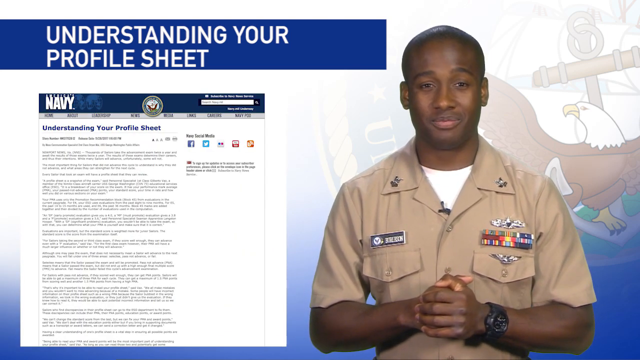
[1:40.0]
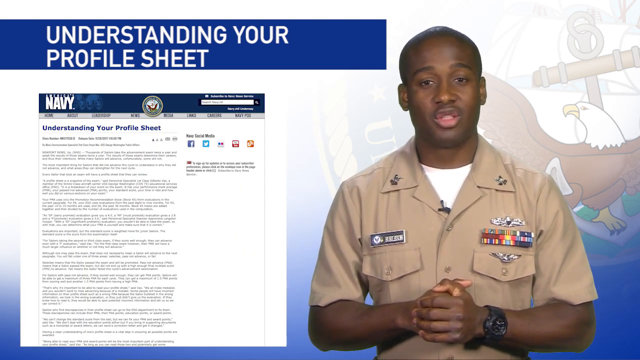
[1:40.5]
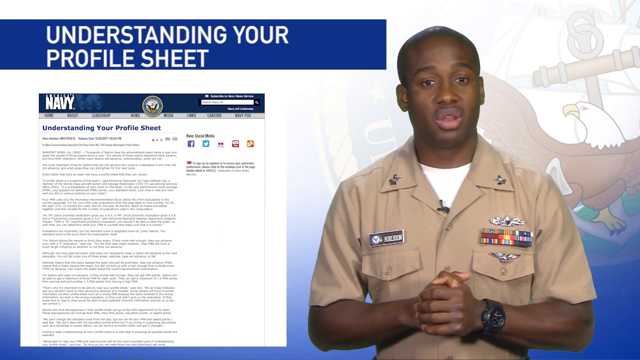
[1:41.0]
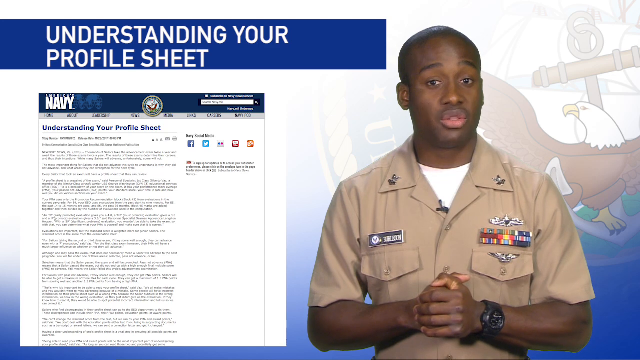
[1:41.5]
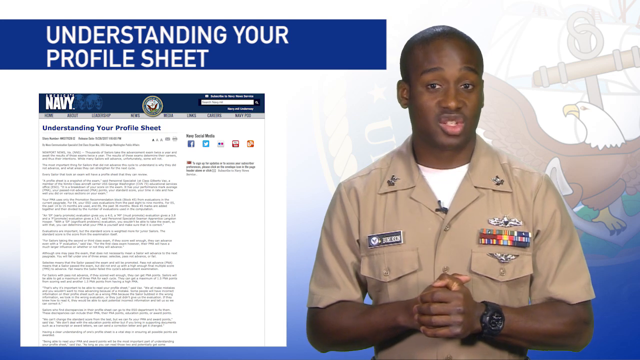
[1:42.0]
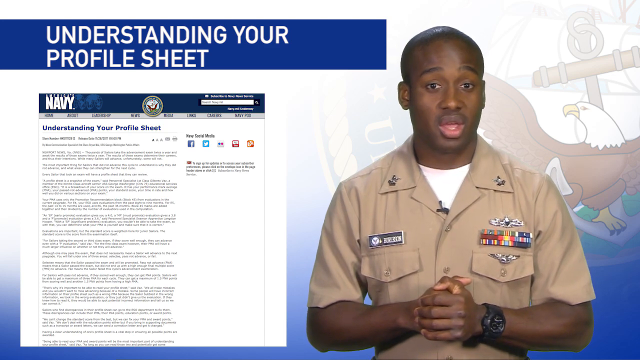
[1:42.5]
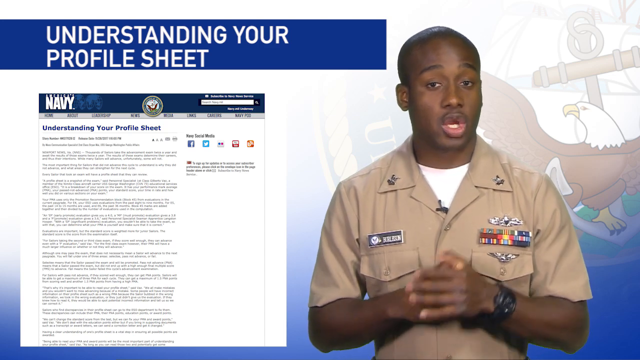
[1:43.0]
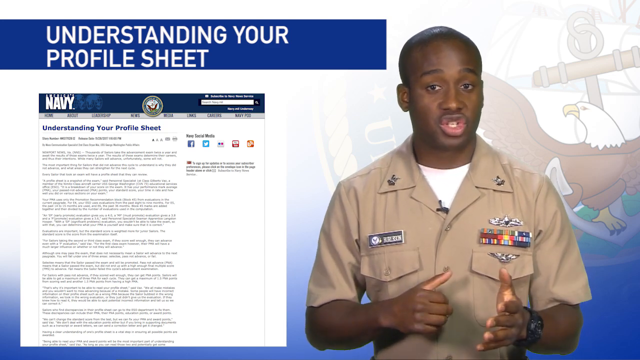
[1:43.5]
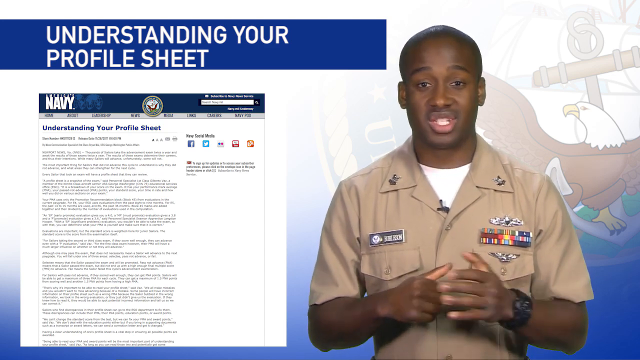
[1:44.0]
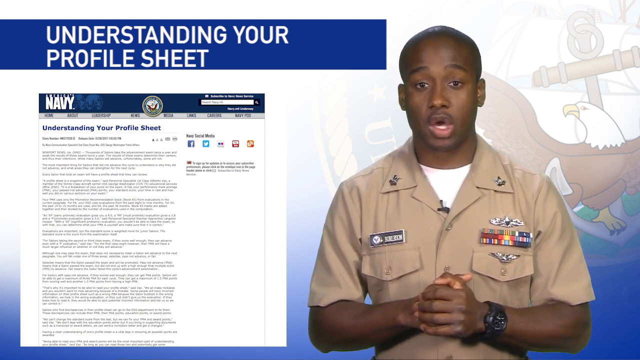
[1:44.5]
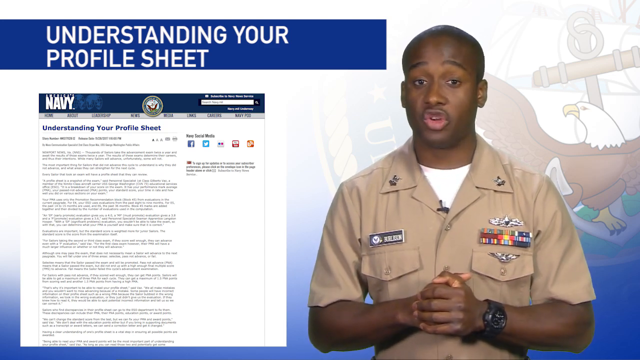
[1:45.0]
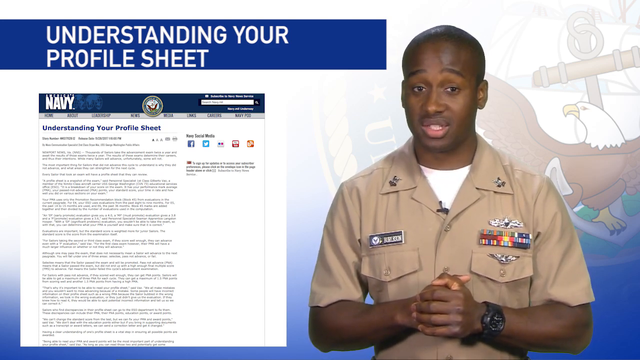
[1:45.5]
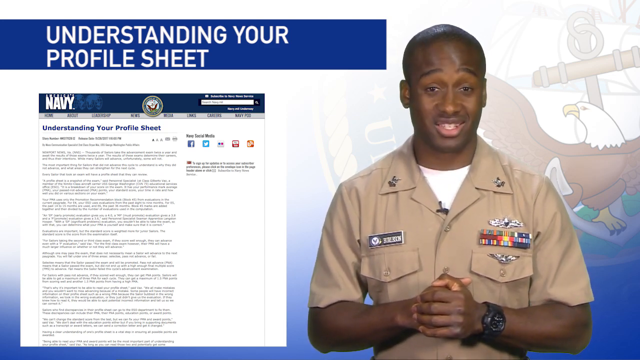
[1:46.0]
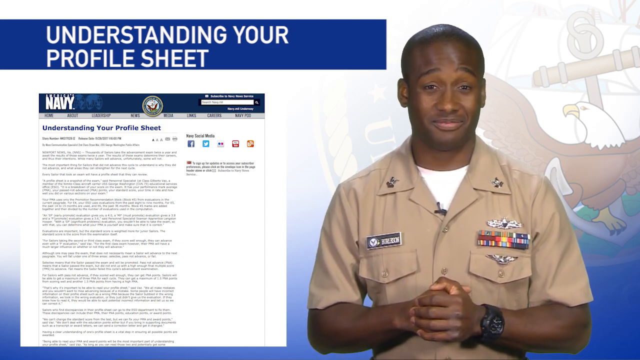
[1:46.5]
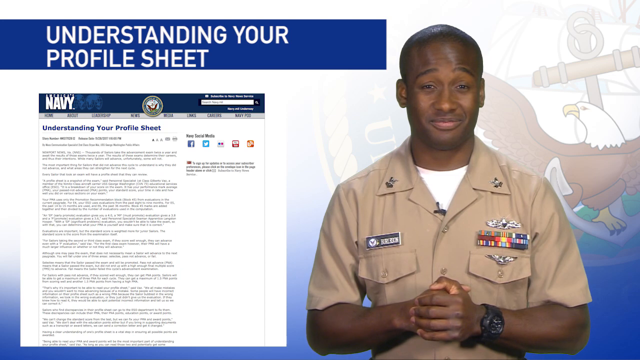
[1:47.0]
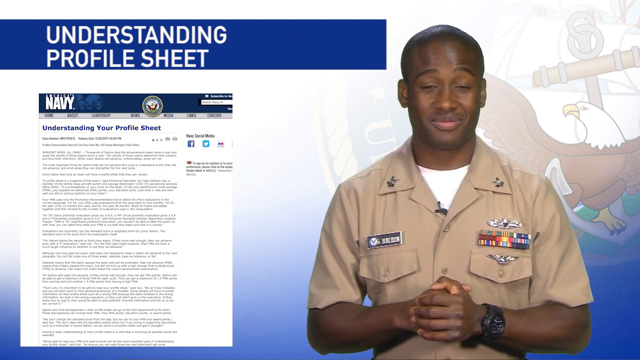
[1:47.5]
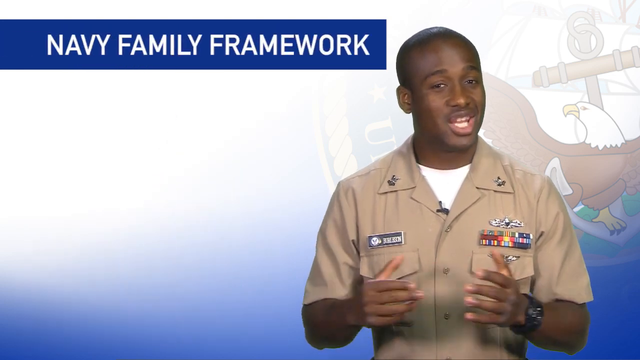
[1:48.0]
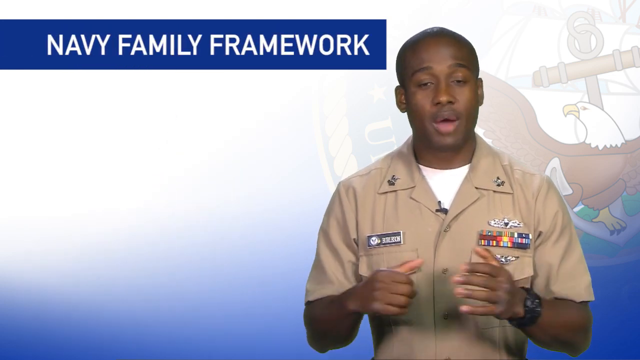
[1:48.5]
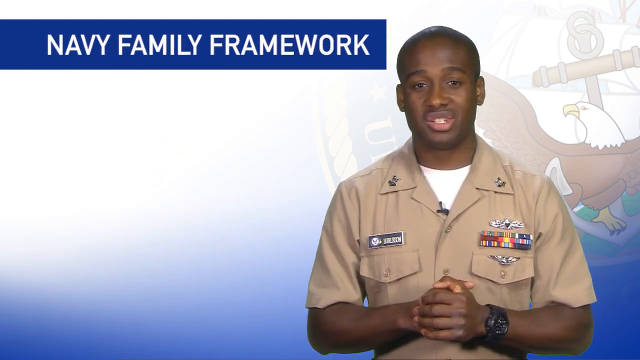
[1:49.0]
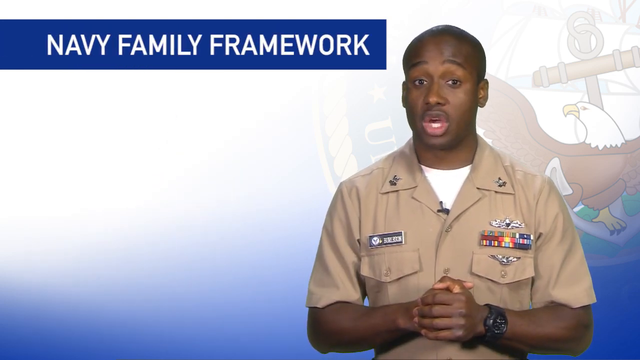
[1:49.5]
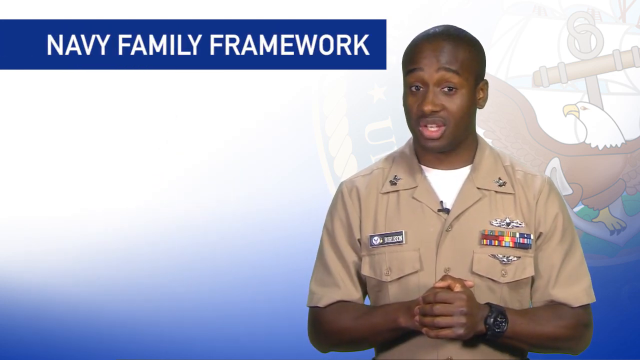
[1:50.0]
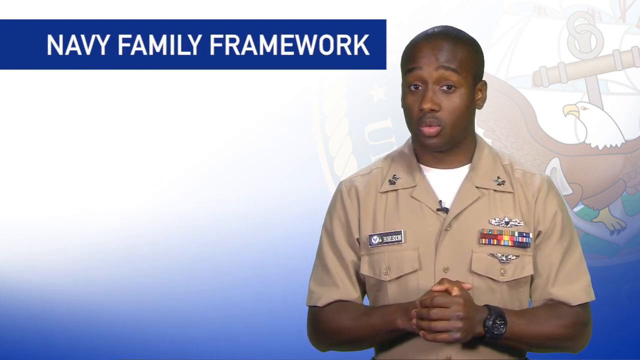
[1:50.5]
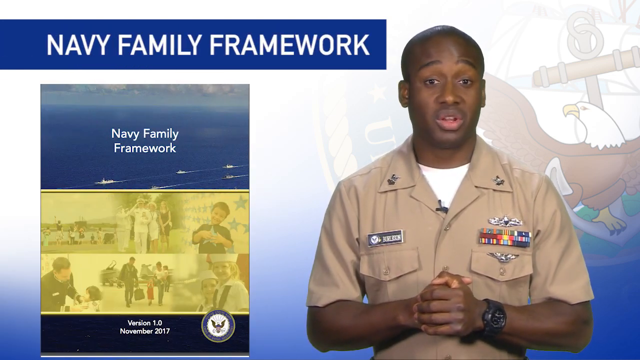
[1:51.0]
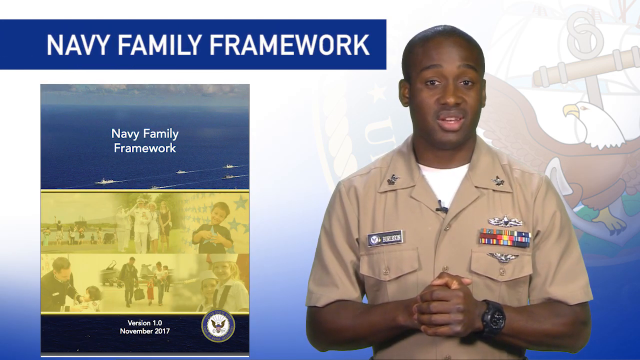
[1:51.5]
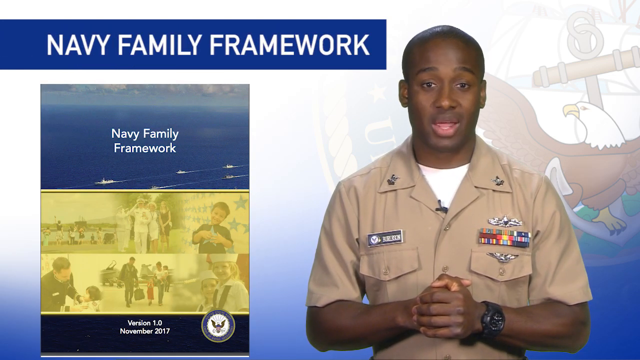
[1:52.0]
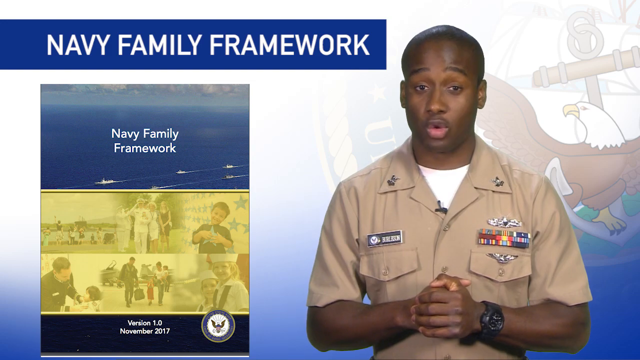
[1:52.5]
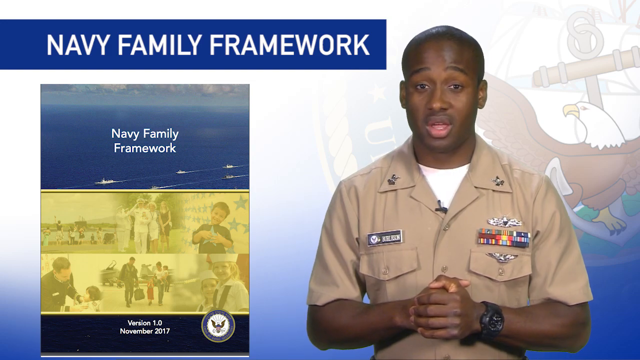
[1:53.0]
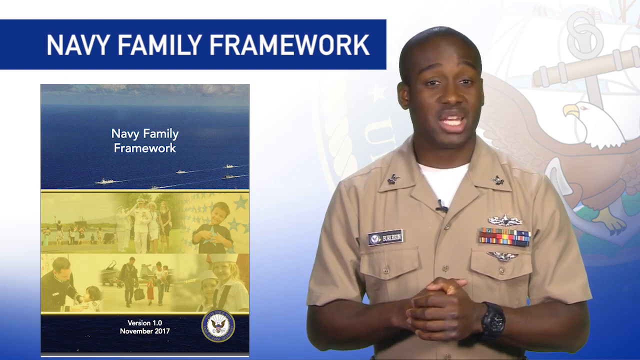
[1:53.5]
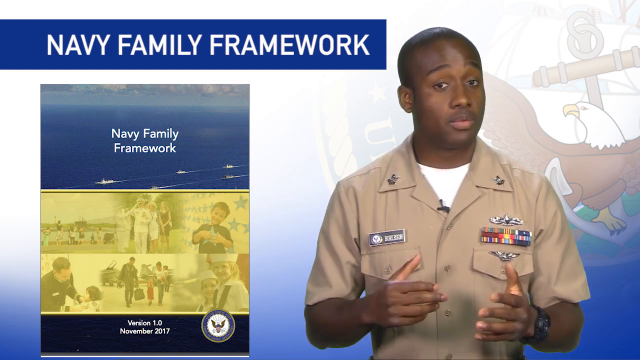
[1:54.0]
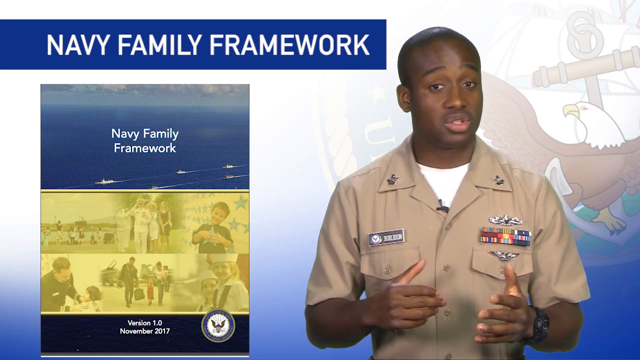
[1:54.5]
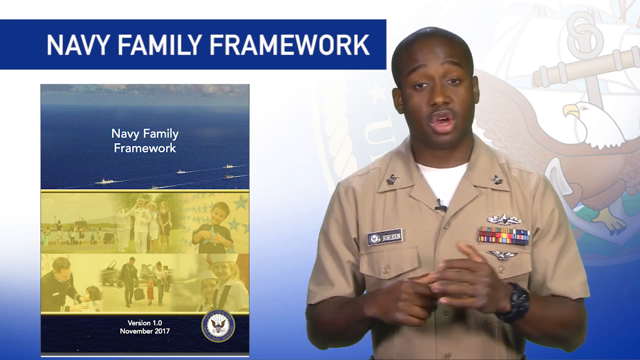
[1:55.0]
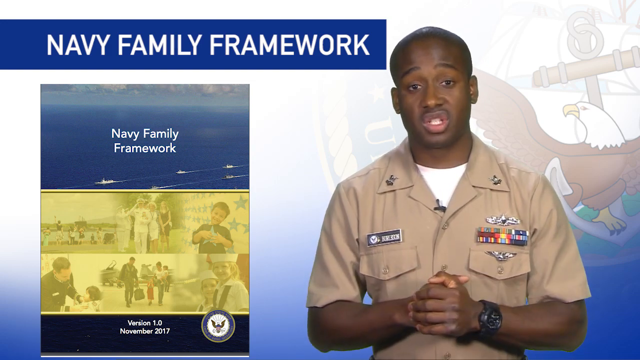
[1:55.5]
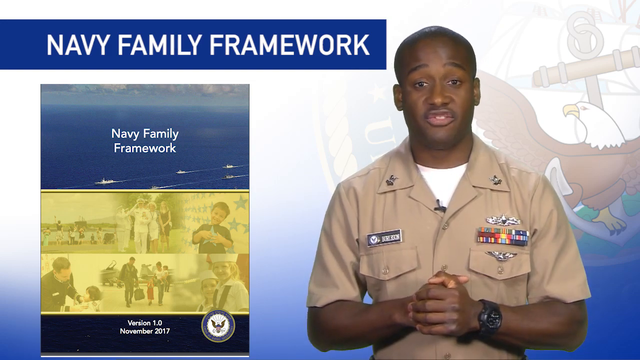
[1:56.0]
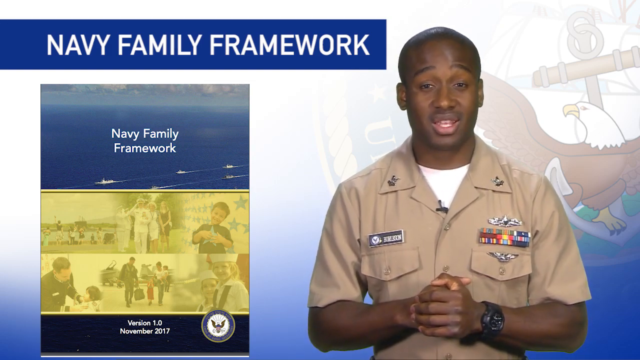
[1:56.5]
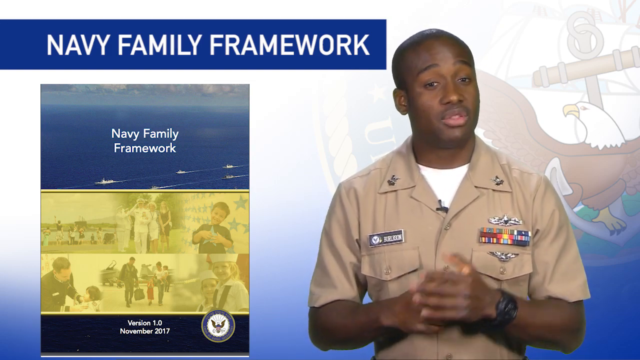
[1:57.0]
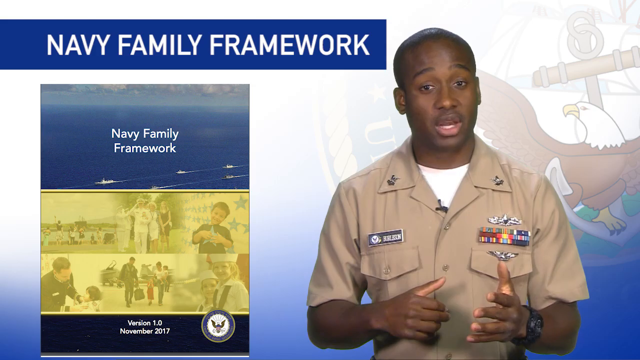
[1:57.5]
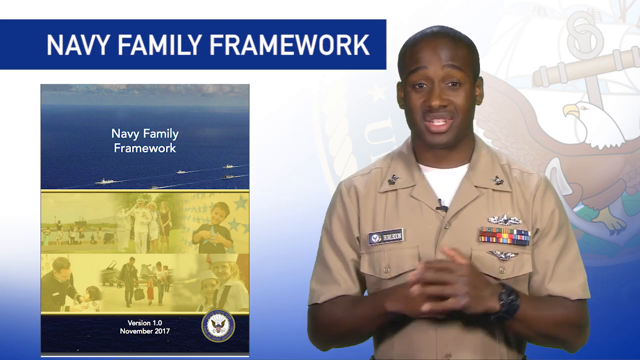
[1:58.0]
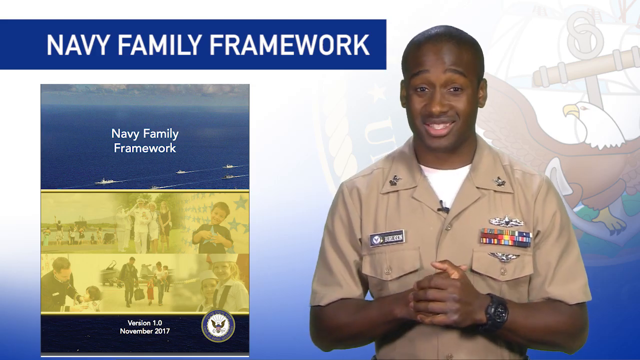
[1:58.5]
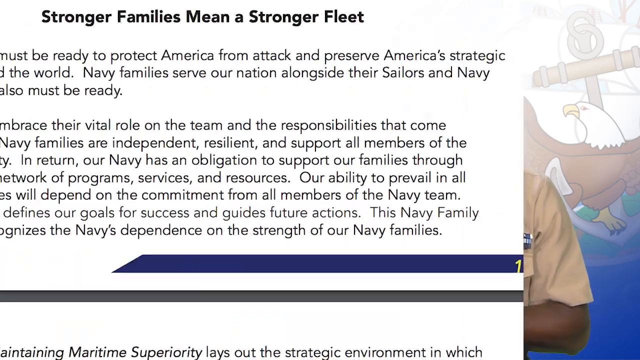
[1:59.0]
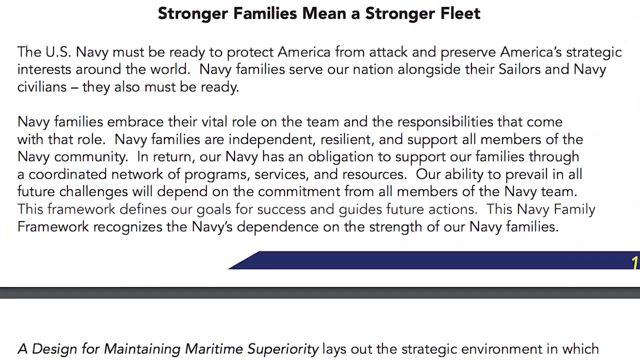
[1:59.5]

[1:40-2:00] The man is still talking. The text on the left changes to "Navy Family Framework." Another picture appears that says "Navy Family Framework version 1.0, November 2017," divided into three sections: the top shows an ocean with five Navy ships sailing on it, the middle shows family members all together and learners from the Navy school meeting their parents, and the bottom shows the version number and date. With the man still talking, a short article appears with the heading "stronger families mean a stronger fleet" and the text "The U.S. Navy must be ready to protect America from attack and preserve America's strategic interests around the world. Navy families serve our nations alongside their sailors and Navy civilians. They also must be ready."